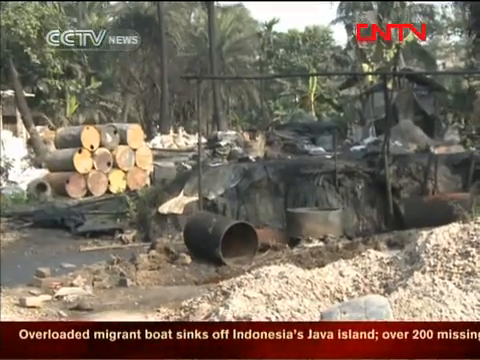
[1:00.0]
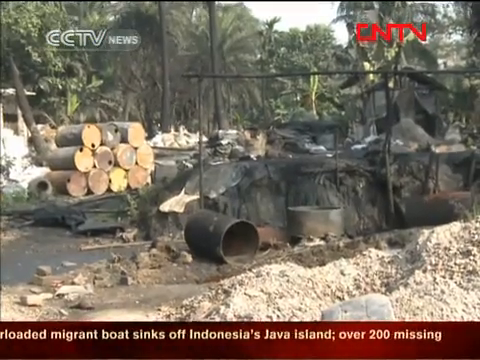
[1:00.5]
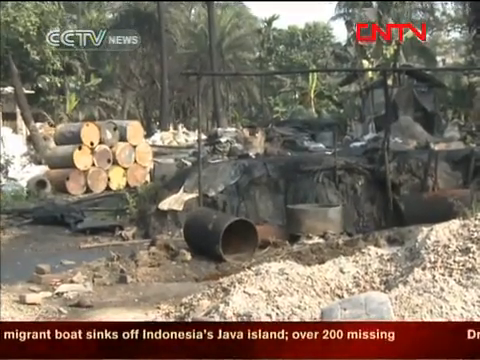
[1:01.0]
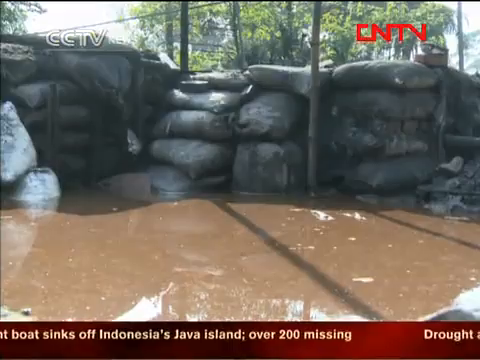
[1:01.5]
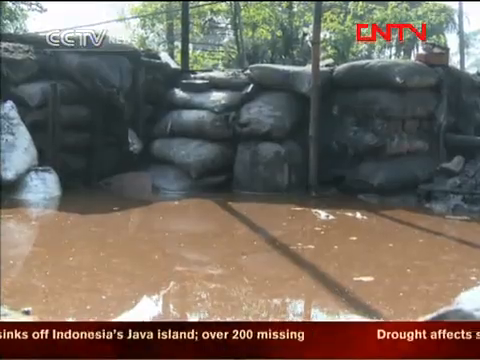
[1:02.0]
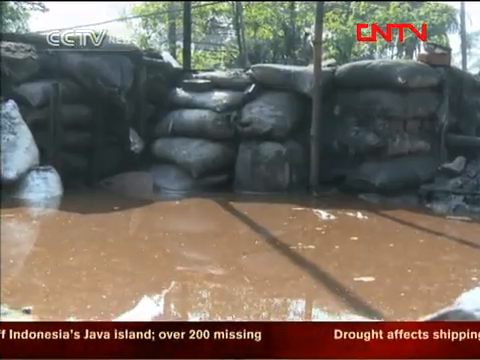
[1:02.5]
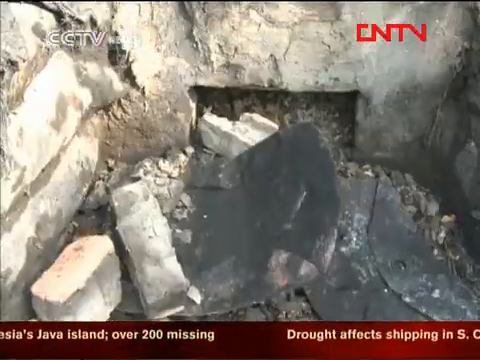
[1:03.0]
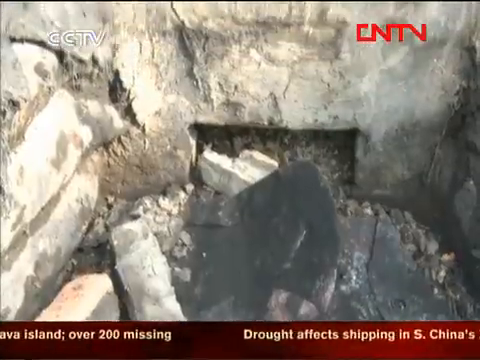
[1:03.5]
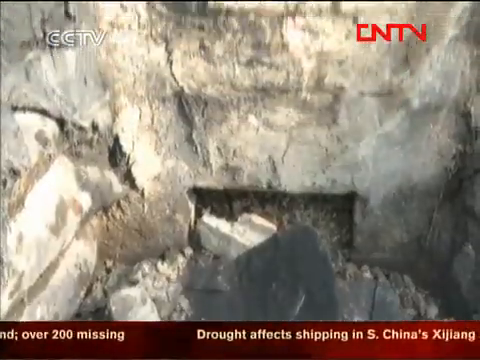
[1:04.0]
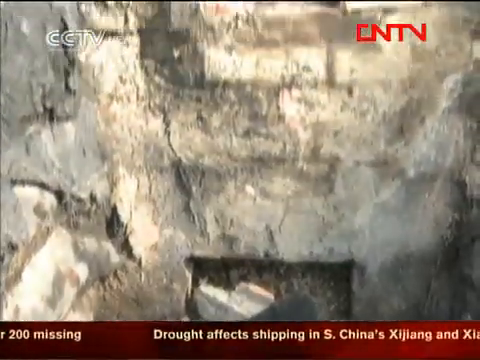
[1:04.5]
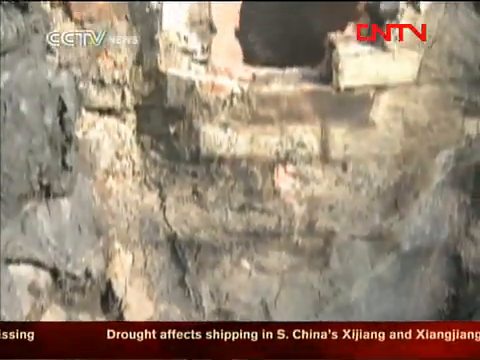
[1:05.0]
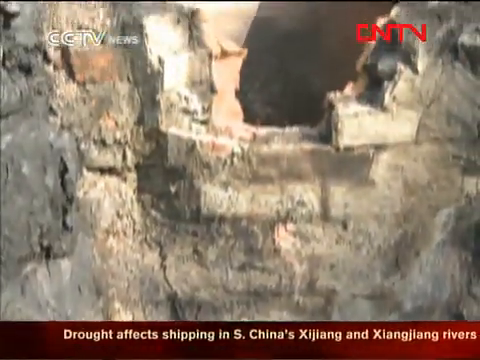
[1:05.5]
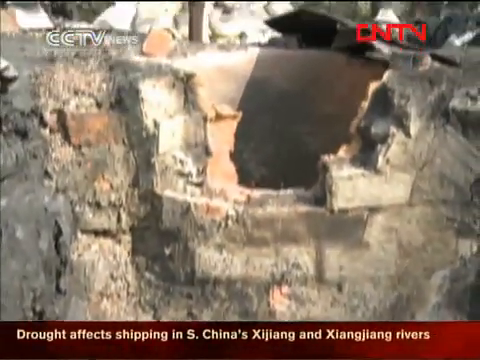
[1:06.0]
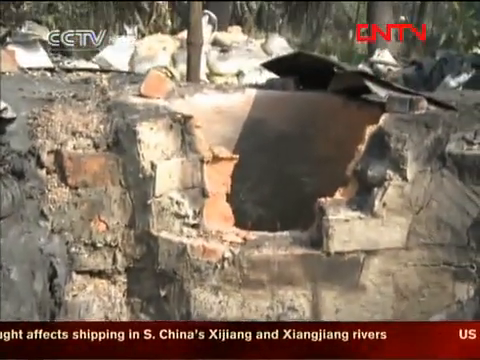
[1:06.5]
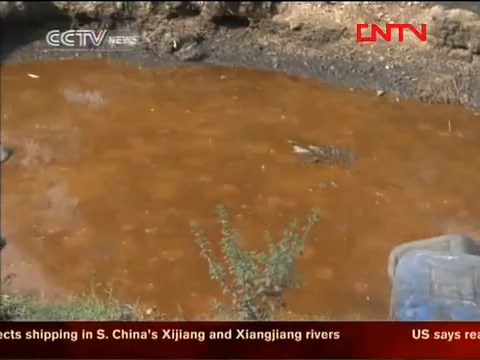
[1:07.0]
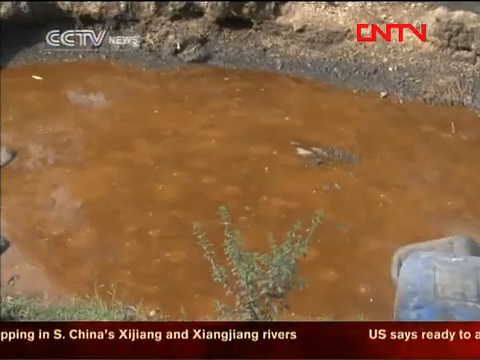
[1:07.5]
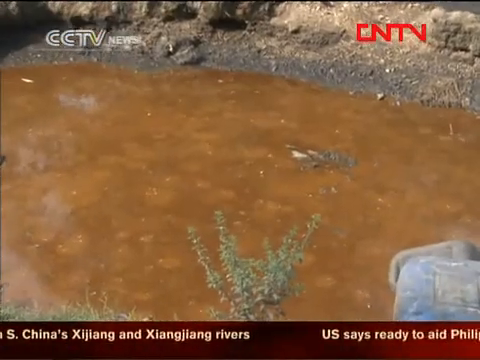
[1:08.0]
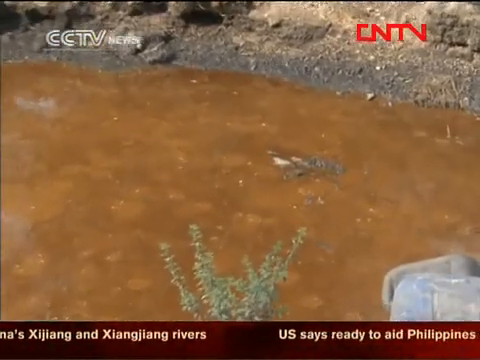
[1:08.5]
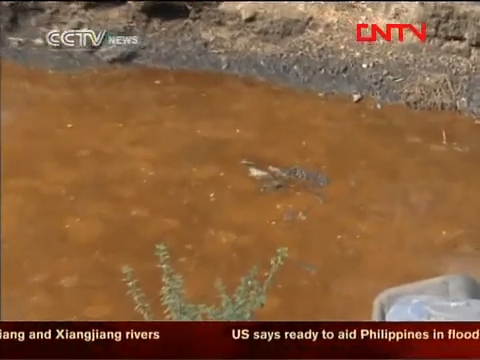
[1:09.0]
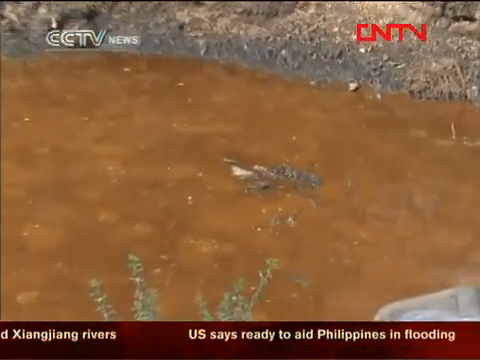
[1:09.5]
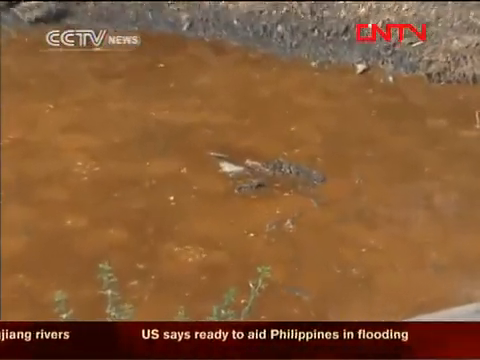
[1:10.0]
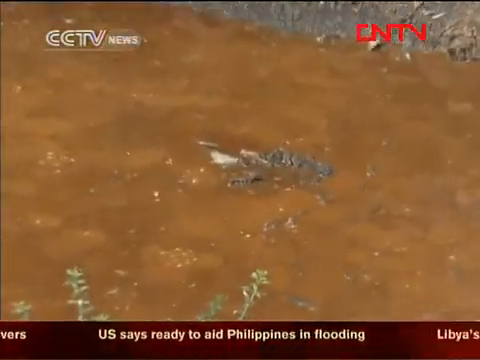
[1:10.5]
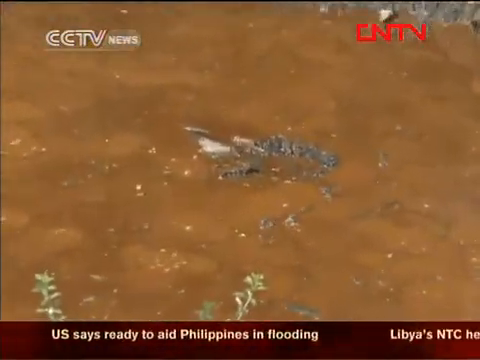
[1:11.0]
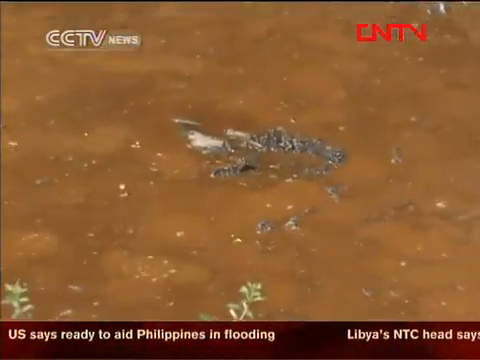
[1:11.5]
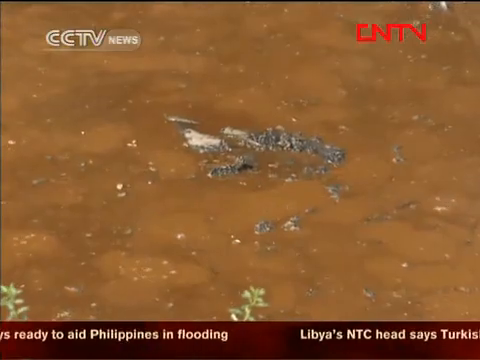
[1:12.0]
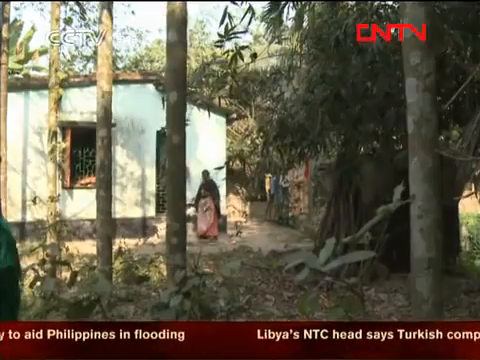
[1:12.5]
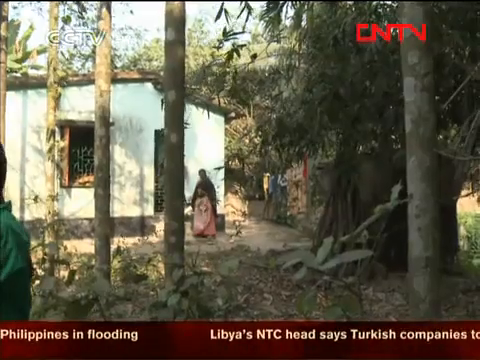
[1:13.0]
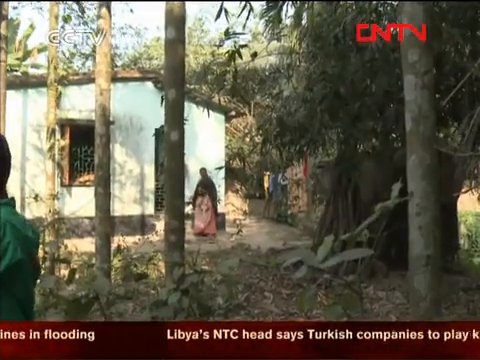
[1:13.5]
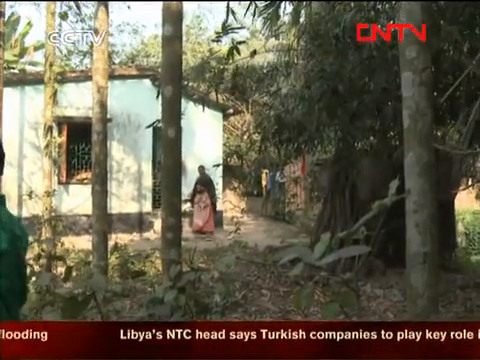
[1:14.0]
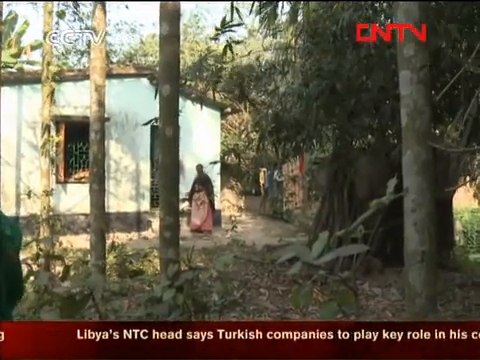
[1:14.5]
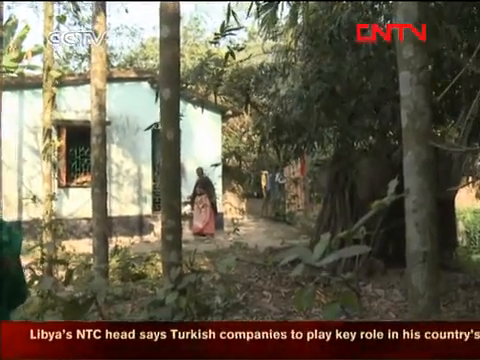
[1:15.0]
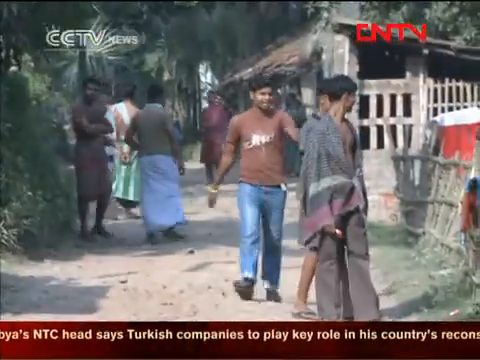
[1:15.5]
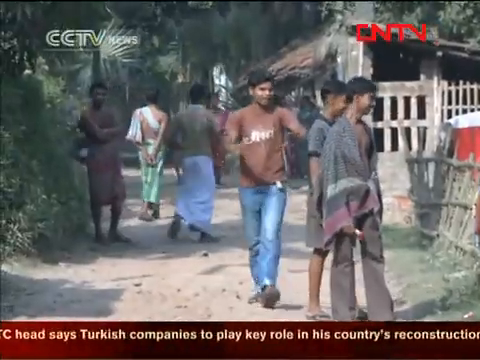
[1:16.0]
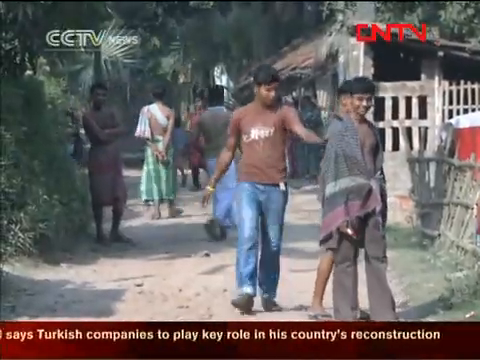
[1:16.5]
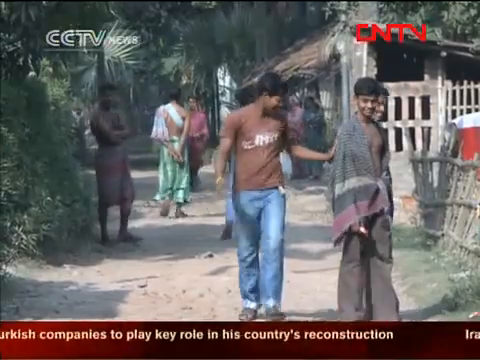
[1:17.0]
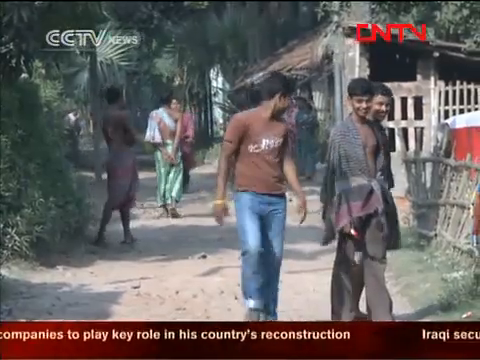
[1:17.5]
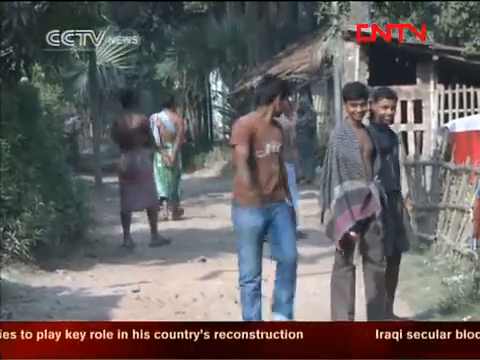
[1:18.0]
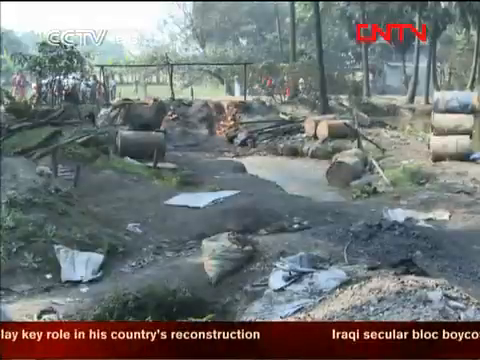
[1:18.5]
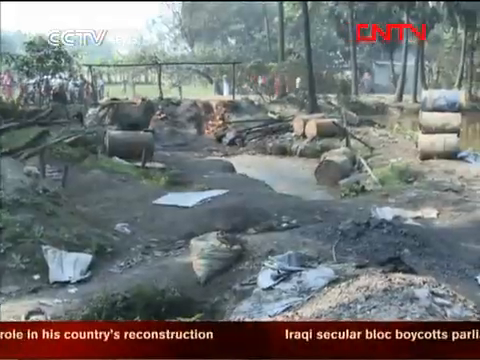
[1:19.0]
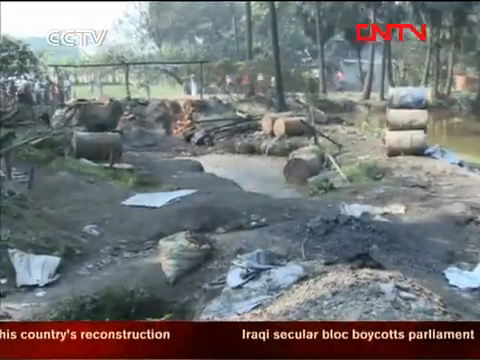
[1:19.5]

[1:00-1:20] A close-up shows pools of very muddy water surrounded by completely dirty sandbags. Another part of the facility is made of concrete, with cutouts in the walls, and looks dilapidated; some walls are destroyed and some bricks are coming off or falling apart. A concrete well has part of its opening collapsed, with debris everywhere. A close-up of the pond shows it completely muddy, with mud, oil and other things mixed in. The camera zooms in on the water to show something gray floating on the surface, possibly dead organisms; it is unclear whether it is a plant or a dead animal. Locals, mostly young people and mostly males, walk around the facility checking out the commotion, on a dirt road with a small hut in the background.